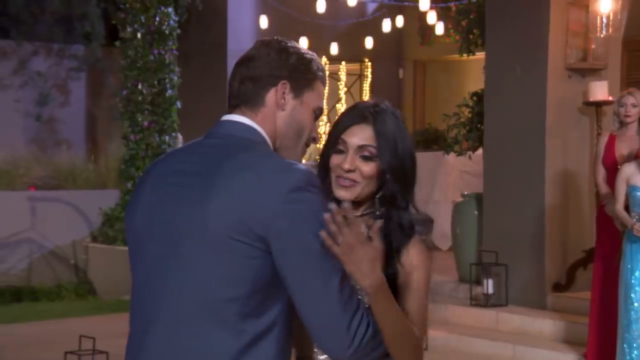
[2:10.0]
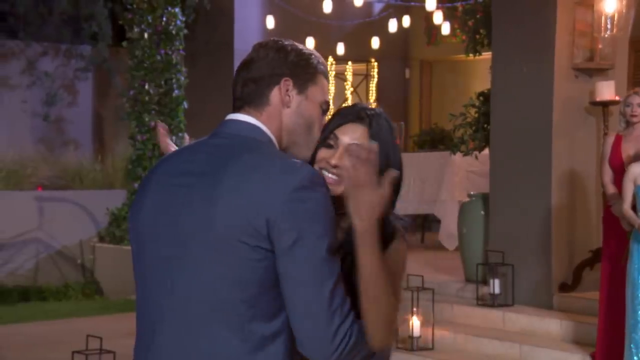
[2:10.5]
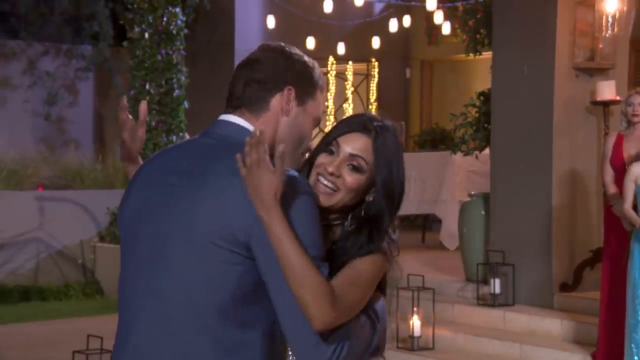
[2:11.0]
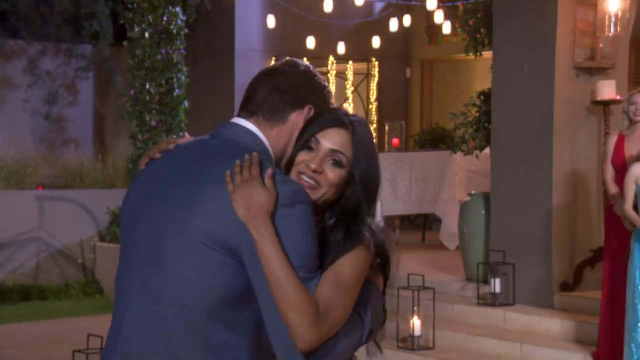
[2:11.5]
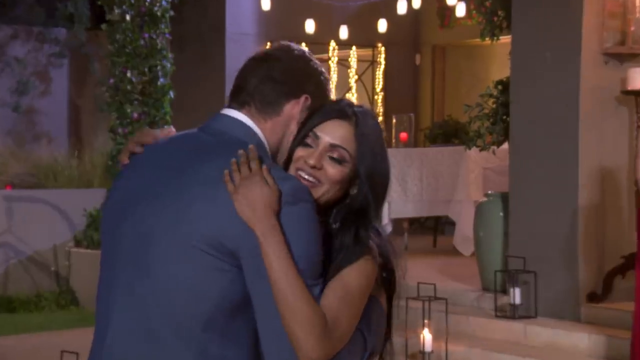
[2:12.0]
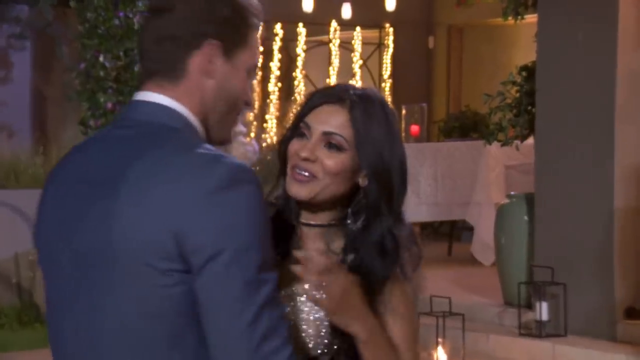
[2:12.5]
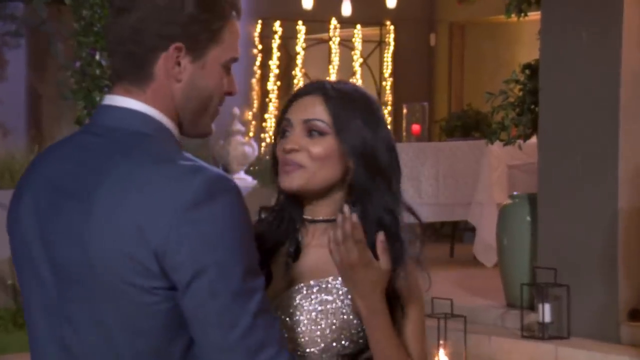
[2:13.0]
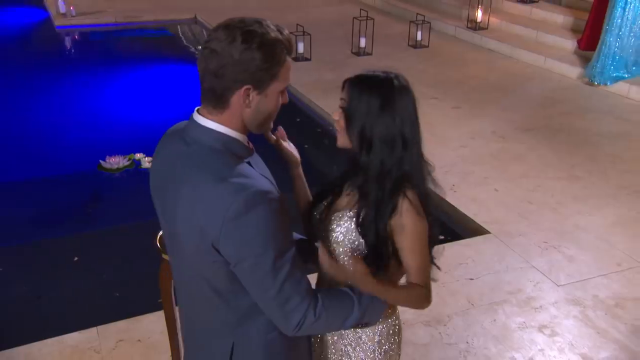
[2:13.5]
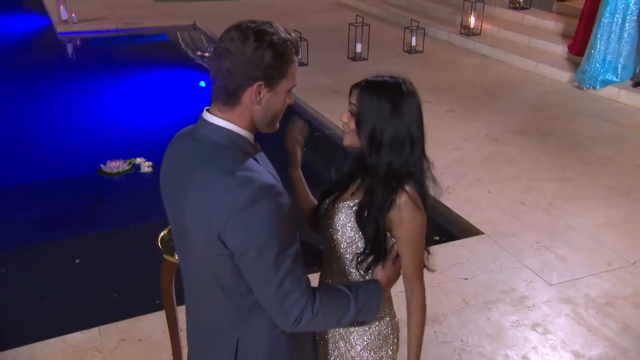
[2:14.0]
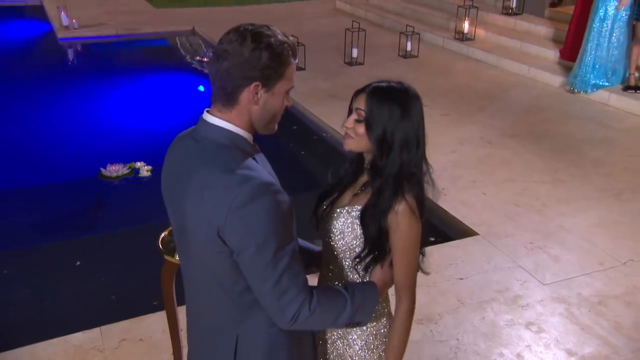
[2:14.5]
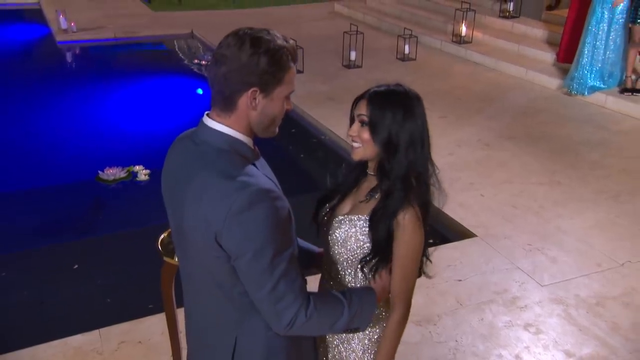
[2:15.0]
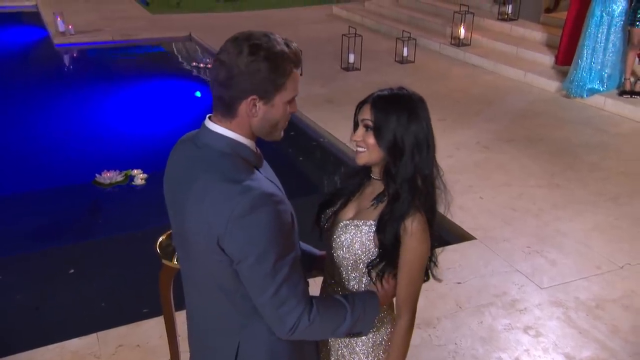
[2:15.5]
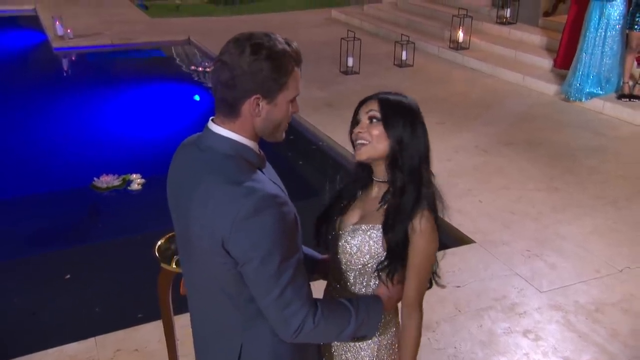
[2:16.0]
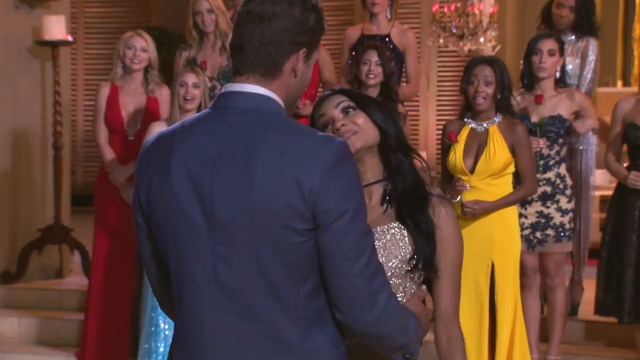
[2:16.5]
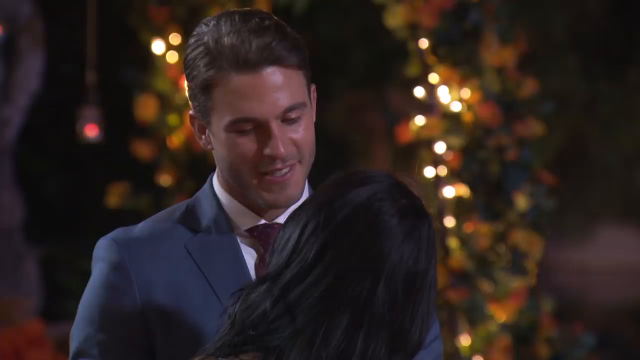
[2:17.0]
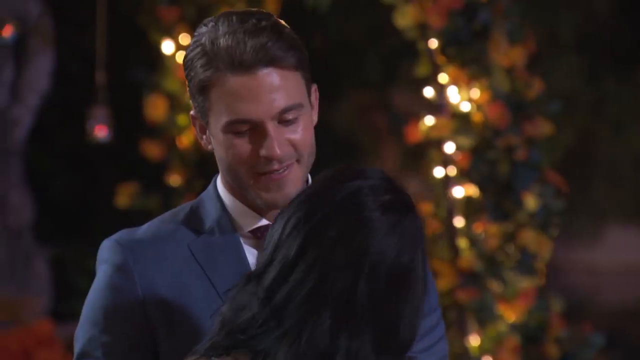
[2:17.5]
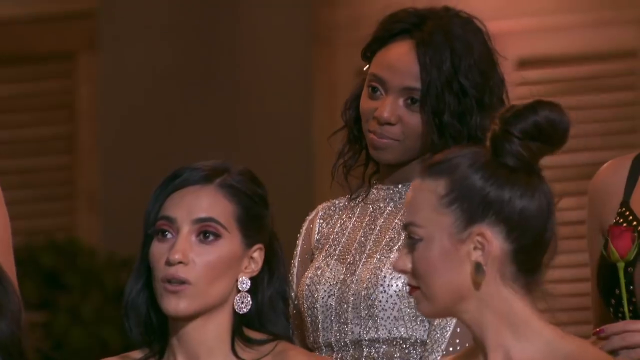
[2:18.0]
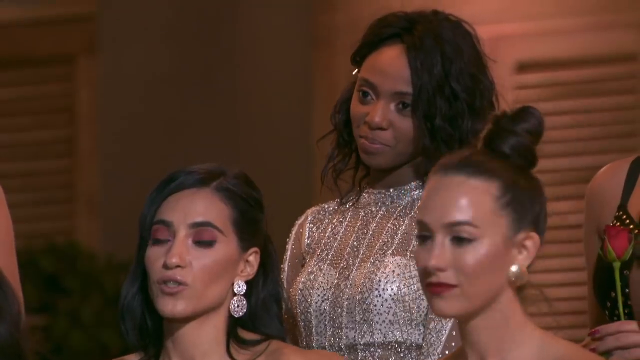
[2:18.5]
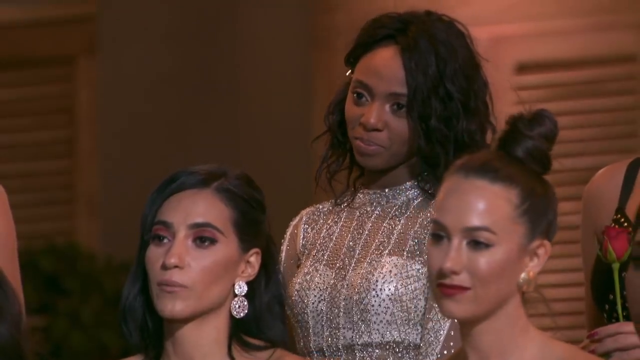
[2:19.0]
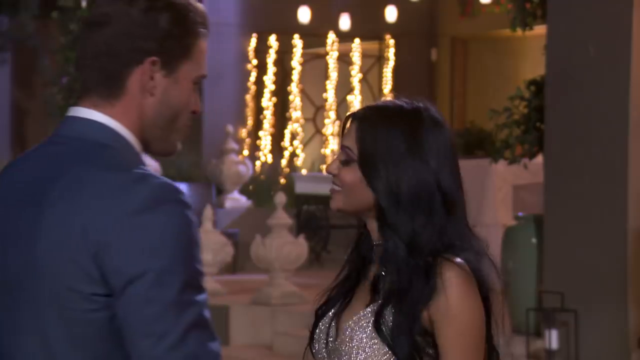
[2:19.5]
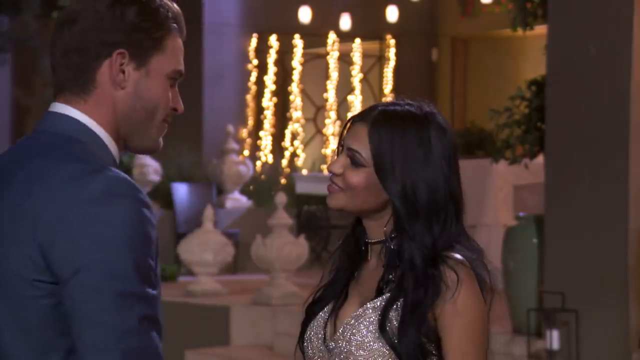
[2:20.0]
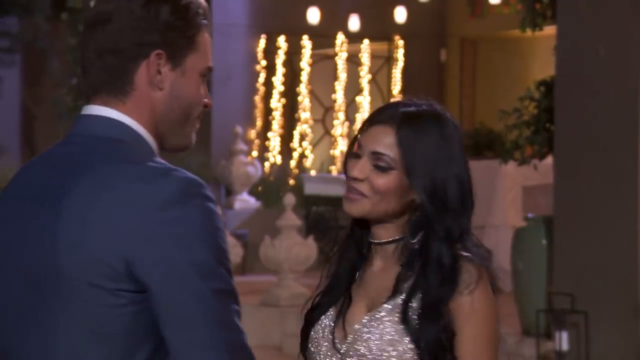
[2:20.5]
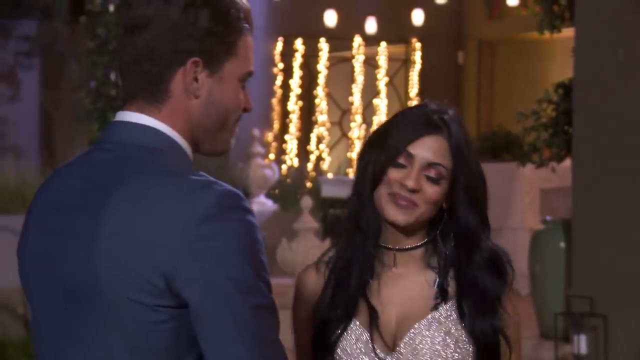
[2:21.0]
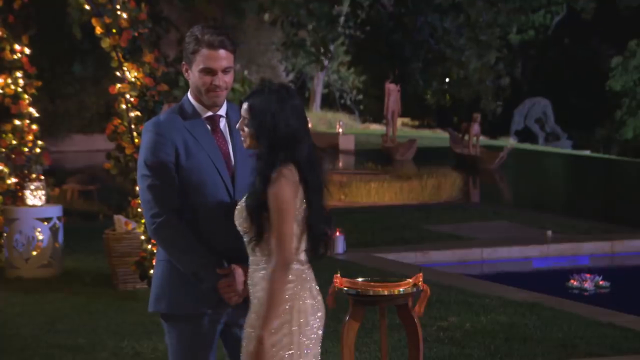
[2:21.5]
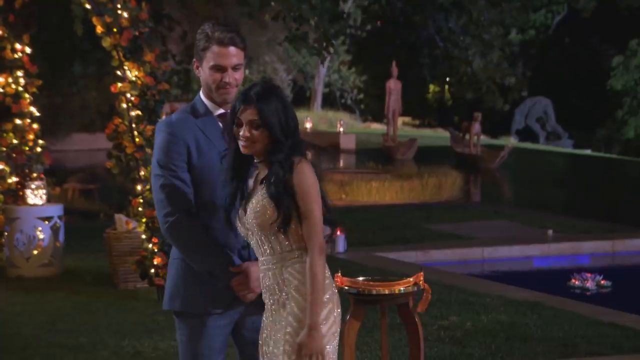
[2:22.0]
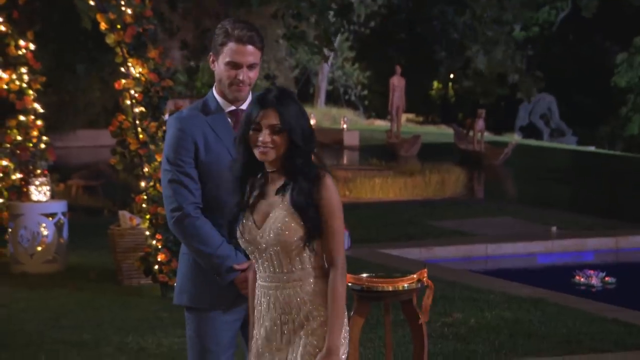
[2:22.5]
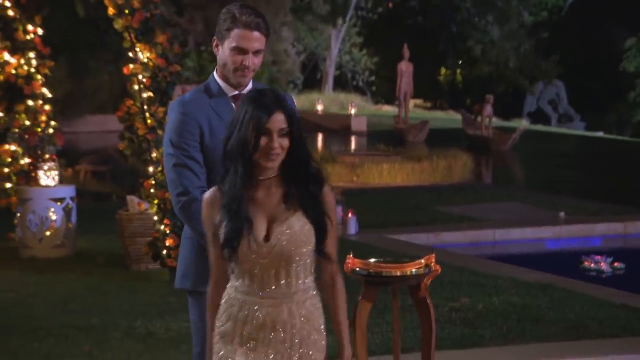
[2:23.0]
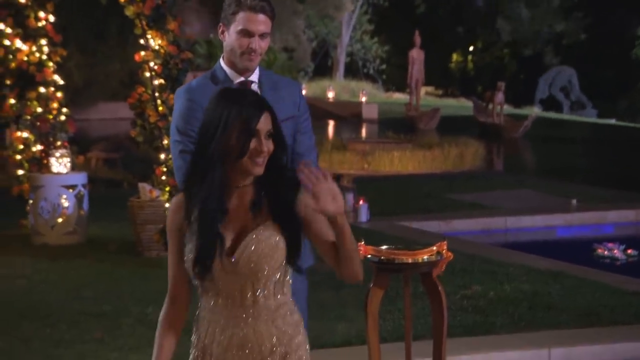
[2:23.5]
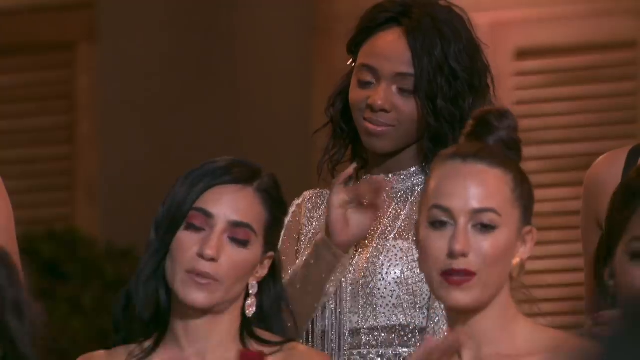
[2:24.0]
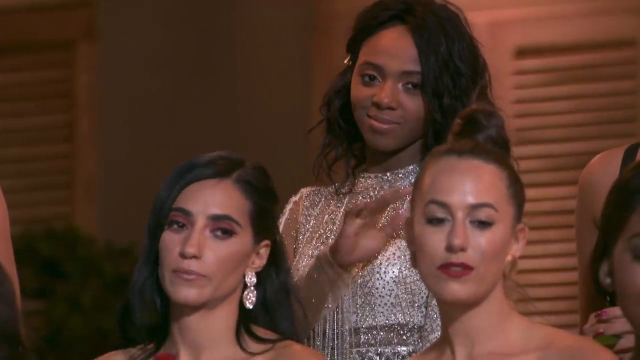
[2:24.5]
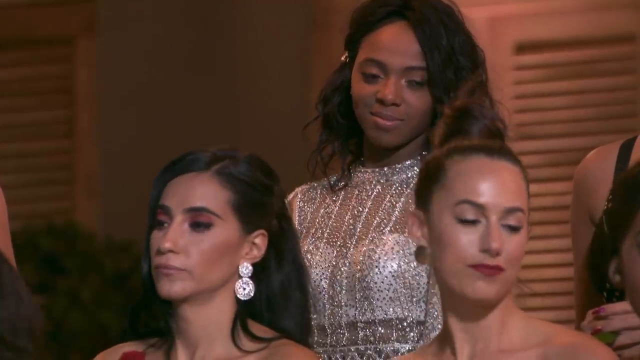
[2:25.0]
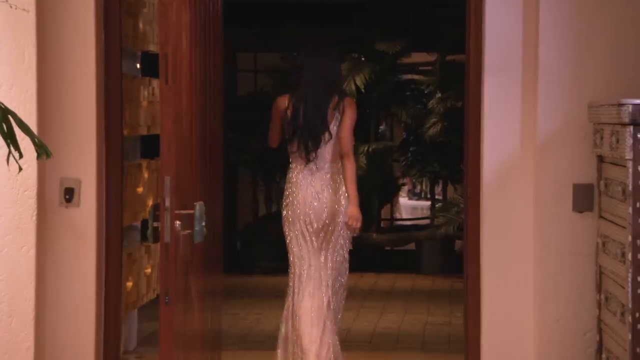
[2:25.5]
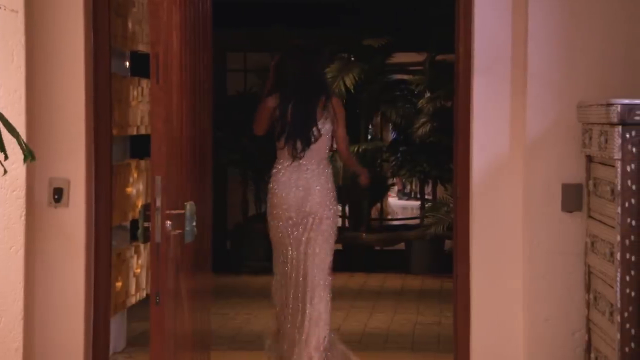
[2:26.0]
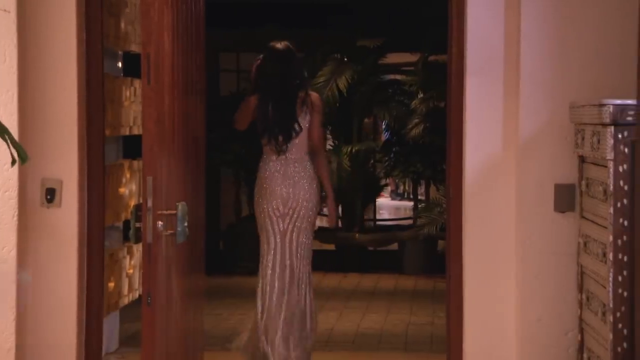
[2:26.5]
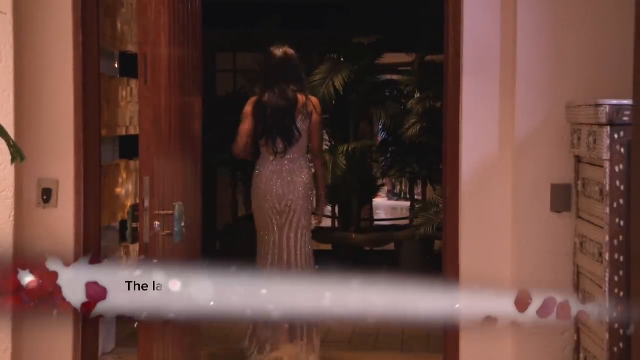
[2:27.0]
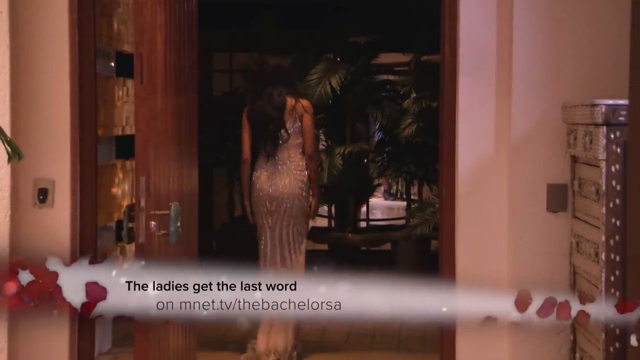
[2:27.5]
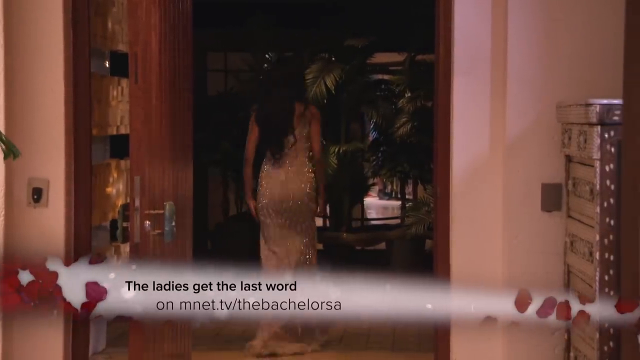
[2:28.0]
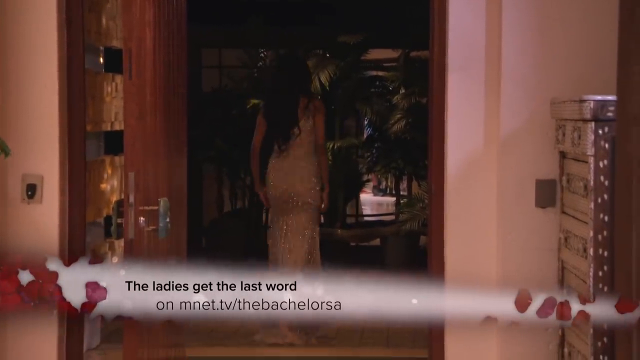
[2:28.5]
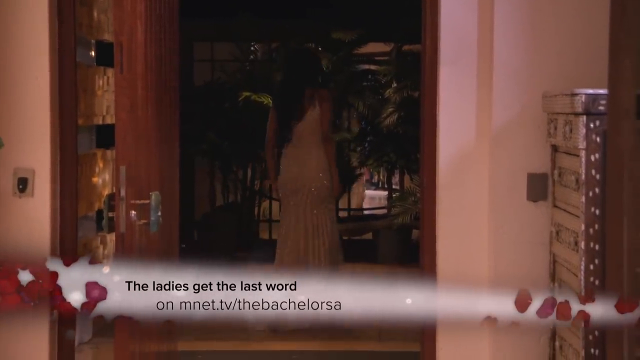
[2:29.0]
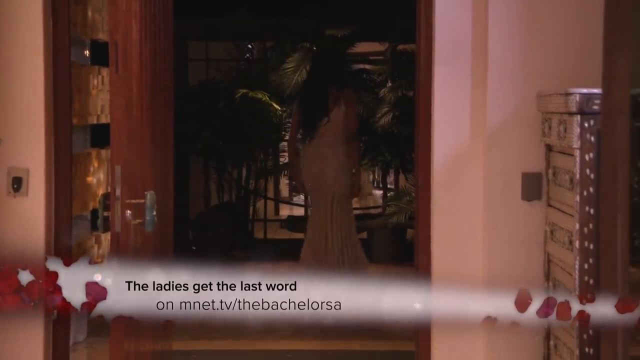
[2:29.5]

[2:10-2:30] A white woman of about 33 to 35 with long black hair, in a sleeveless silver dress, hugs a white man wearing a silver suit, a white shirt and a dark maroon tie. They hug and embrace as the camera zooms into the woman's face and then zooms out. Behind them is a square blue pool, and metal light fixtures with lit candles inside drape from the roof. The two talk and gaze into each other's eyes. The camera quickly focuses on the audience at the back, who stand watching the pair embrace, then zooms into the group of ladies and further onto a black woman in a shimmery silver dress with long black hair that comes just to her shoulders. The camera moves back to the man and woman, who are still talking and smiling at each other.